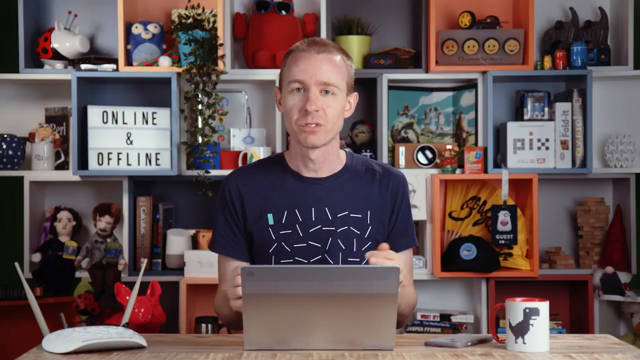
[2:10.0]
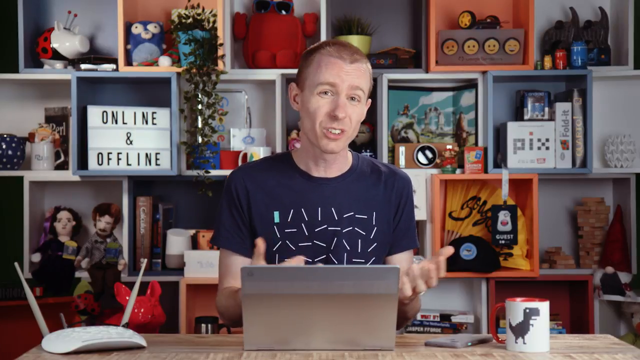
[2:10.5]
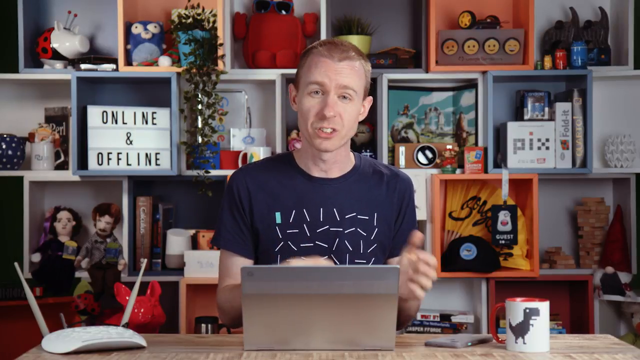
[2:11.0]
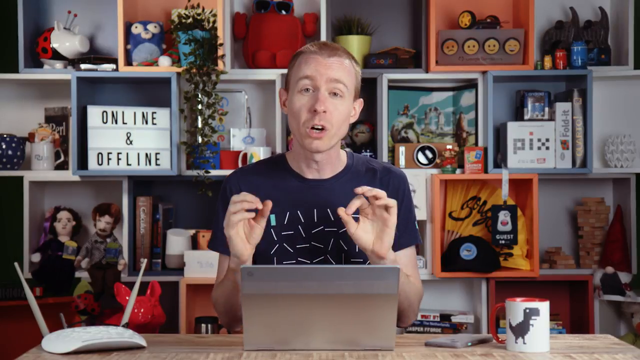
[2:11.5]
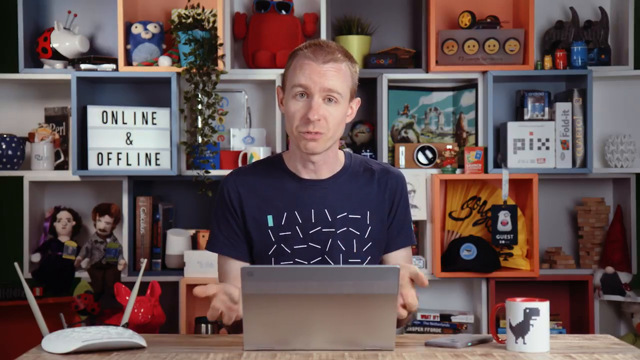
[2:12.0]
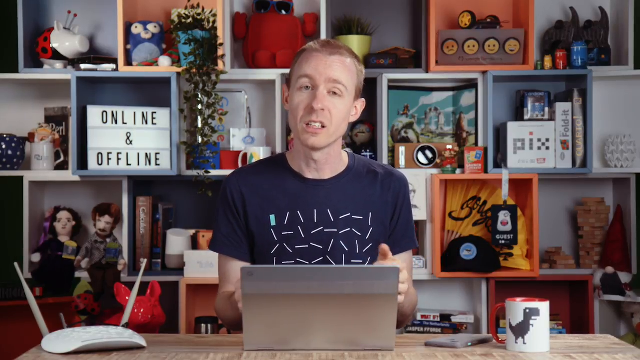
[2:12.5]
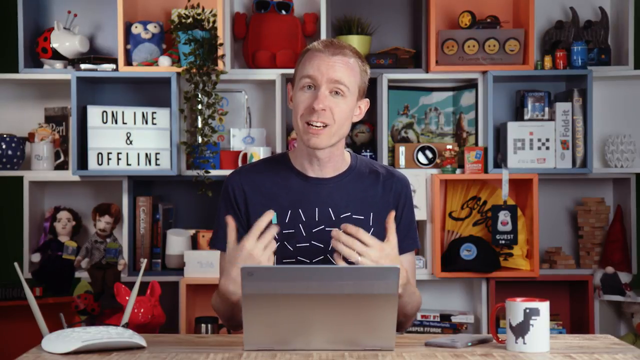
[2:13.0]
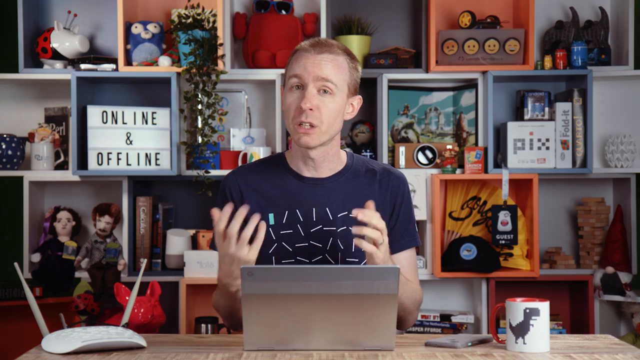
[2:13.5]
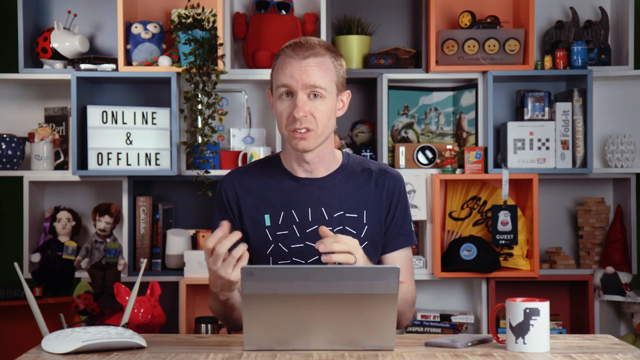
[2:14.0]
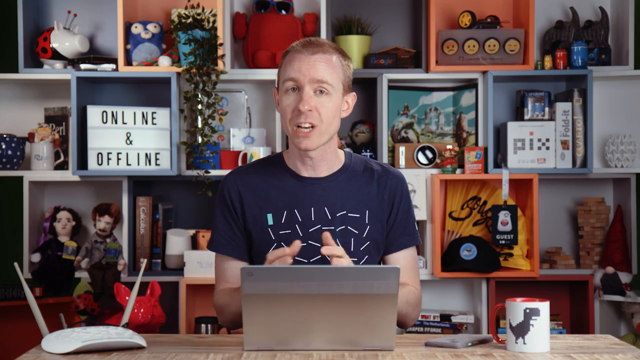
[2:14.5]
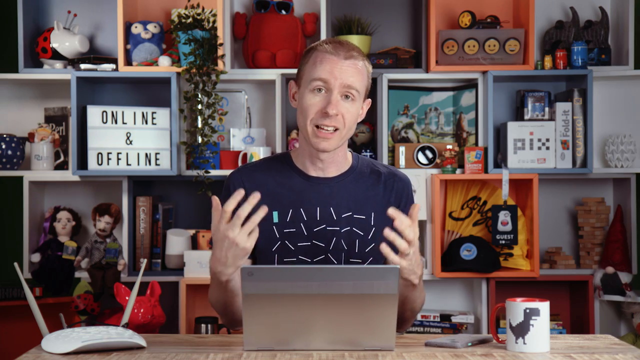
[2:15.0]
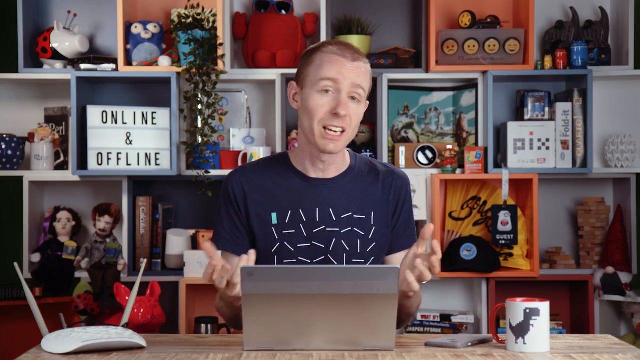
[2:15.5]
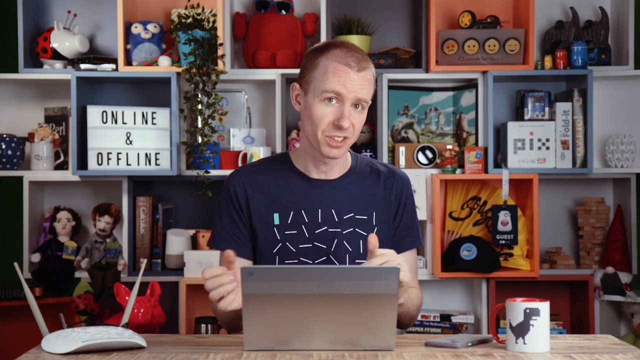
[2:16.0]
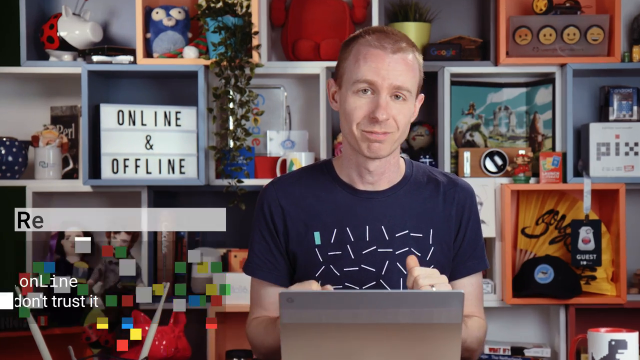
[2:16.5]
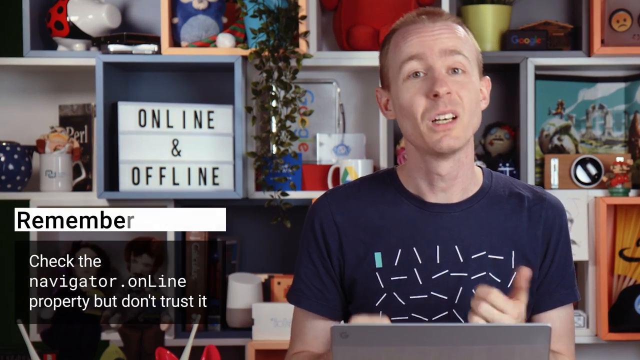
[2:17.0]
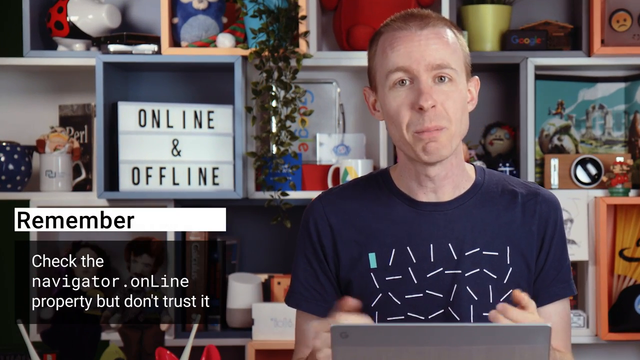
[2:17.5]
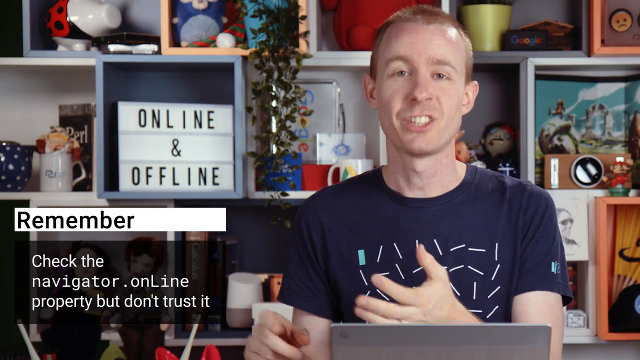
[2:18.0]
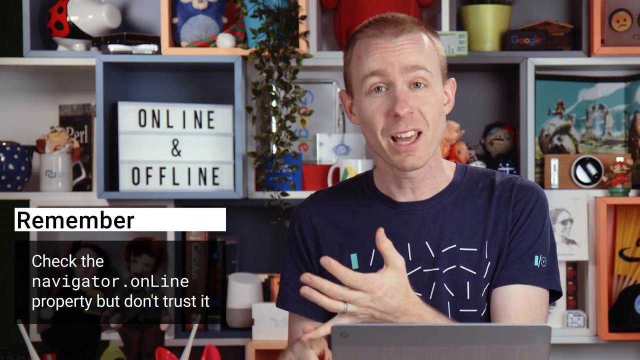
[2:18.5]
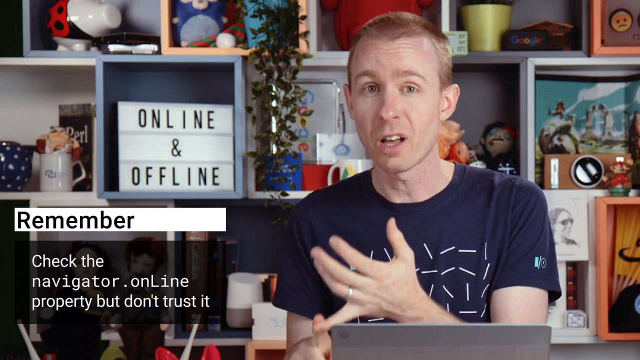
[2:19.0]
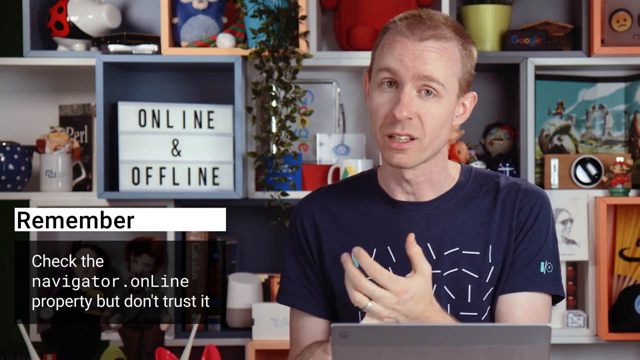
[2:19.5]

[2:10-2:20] The man, sitting down, talks to the camera enthusiastically, moving his hands around, turning them from side to side and moving them up and down. On the left-hand side, text reads "remember, check the navigator.online property but don't trust it." The camera slightly zooms in on the bottom left corner of the screen when that text appears. The man opens his right hand, places his left fingers on his pinky, and then points at the camera.